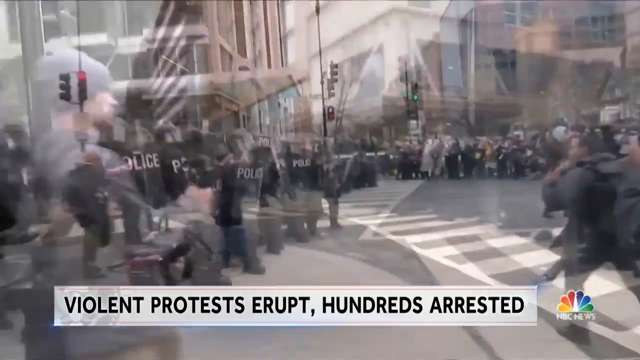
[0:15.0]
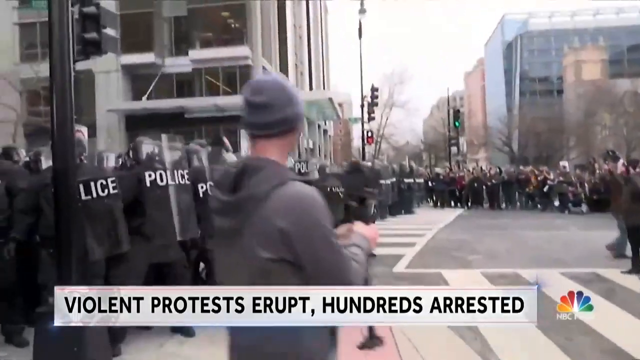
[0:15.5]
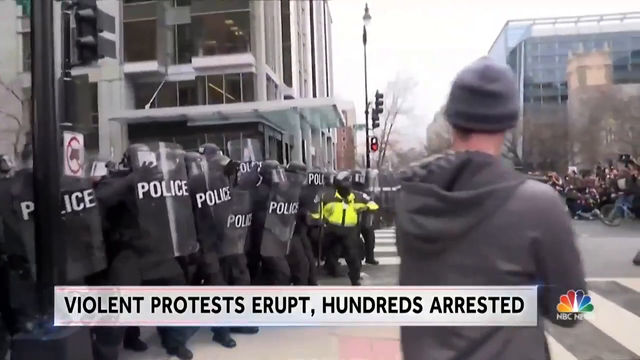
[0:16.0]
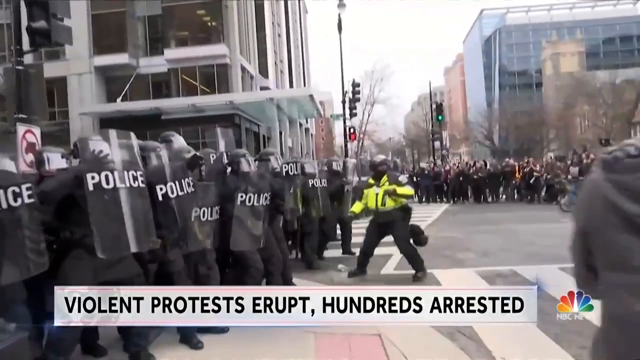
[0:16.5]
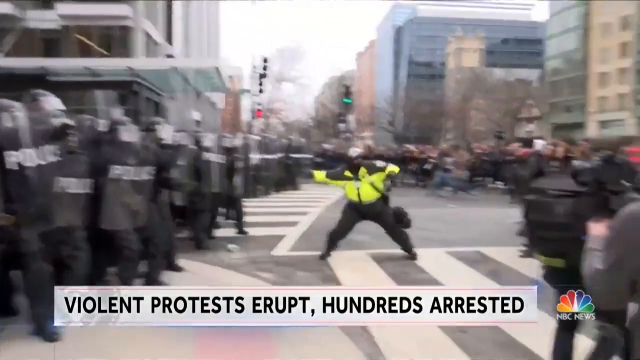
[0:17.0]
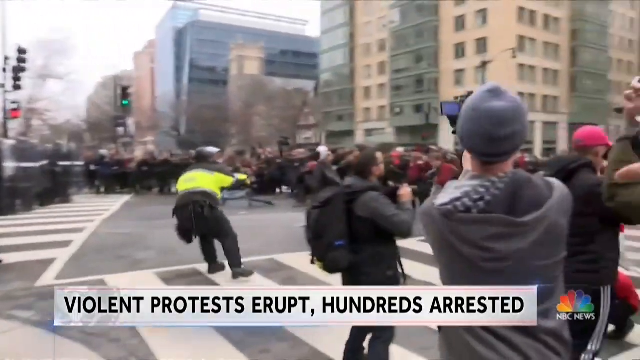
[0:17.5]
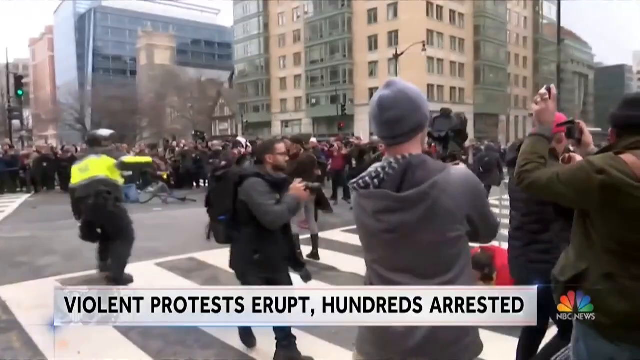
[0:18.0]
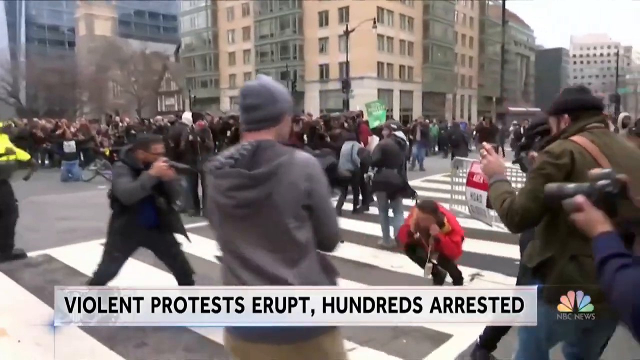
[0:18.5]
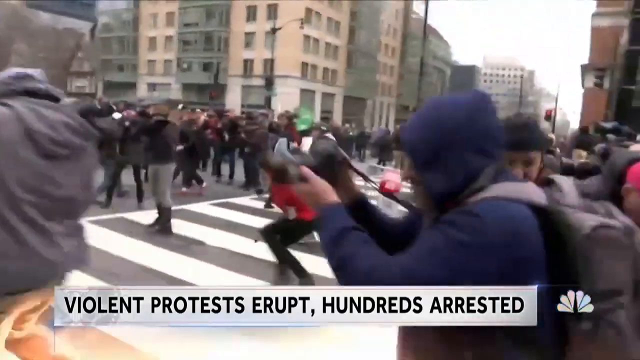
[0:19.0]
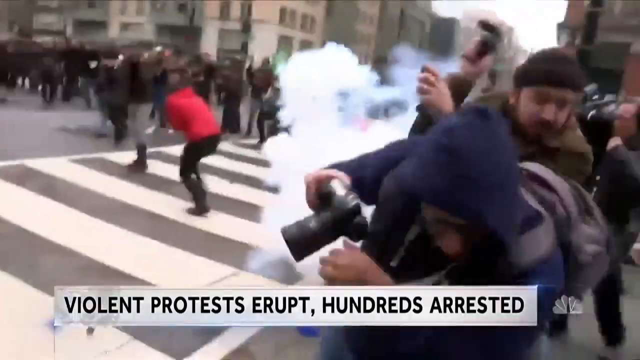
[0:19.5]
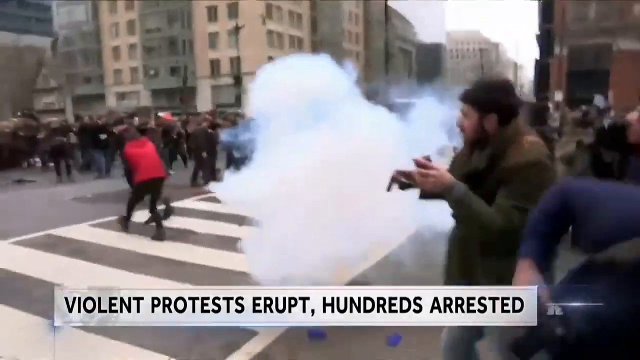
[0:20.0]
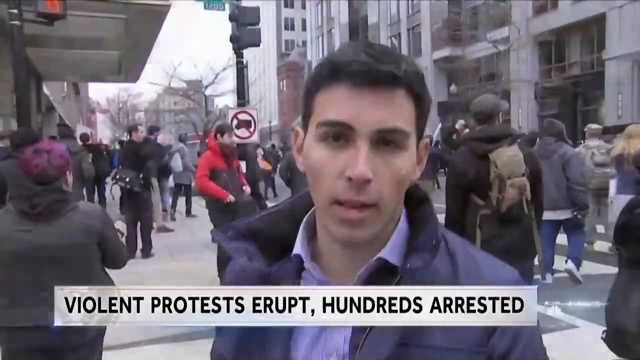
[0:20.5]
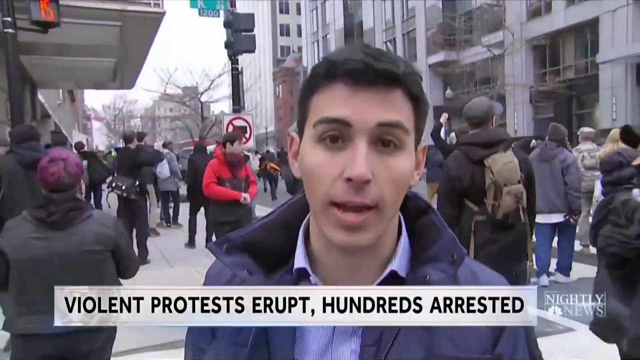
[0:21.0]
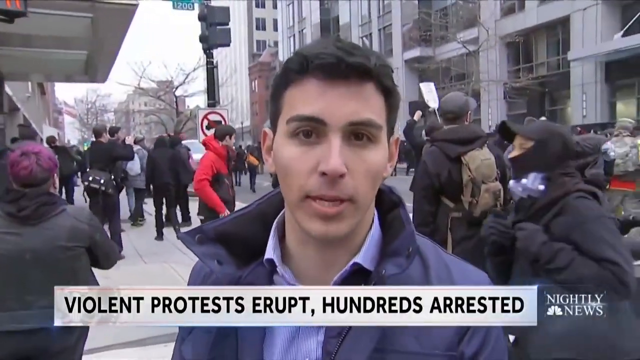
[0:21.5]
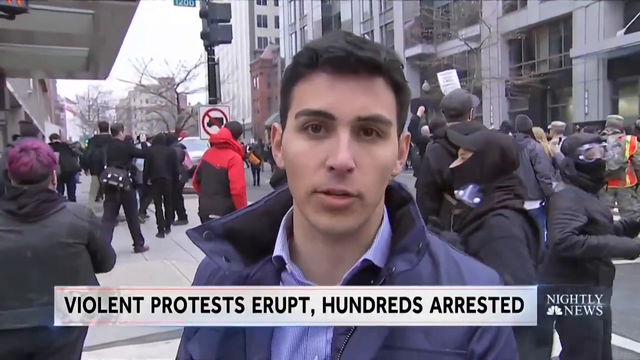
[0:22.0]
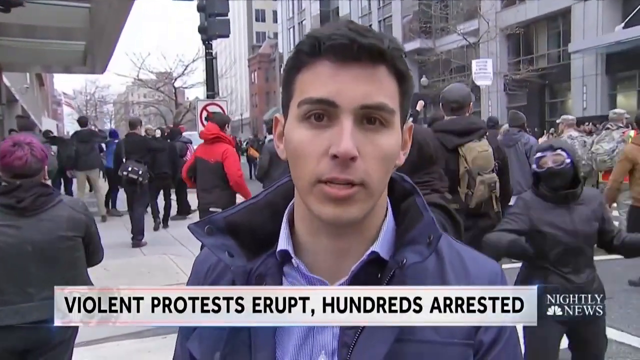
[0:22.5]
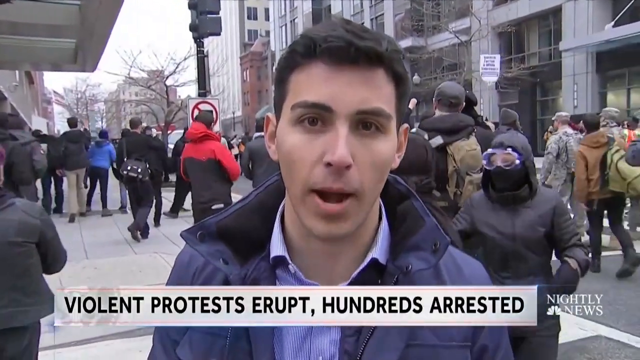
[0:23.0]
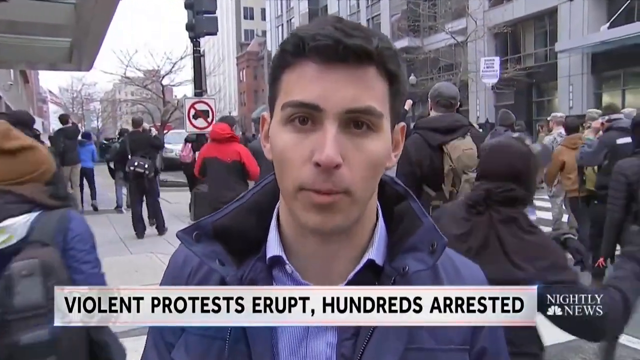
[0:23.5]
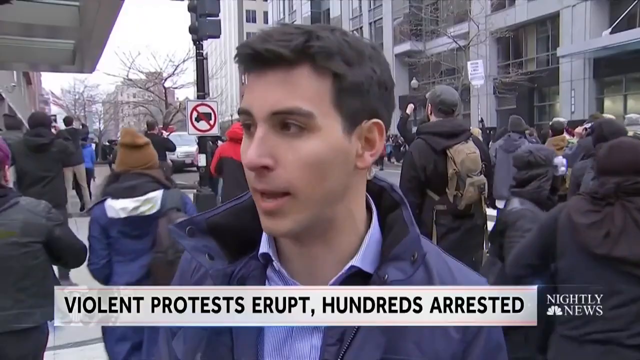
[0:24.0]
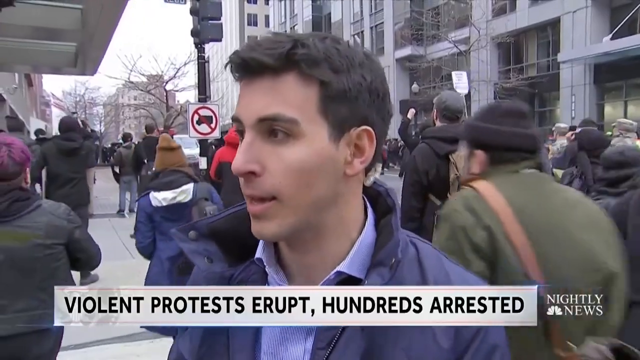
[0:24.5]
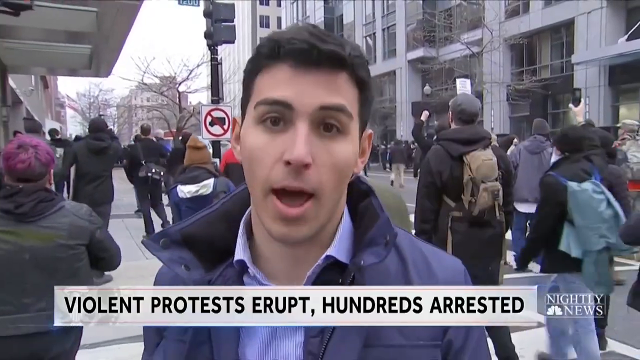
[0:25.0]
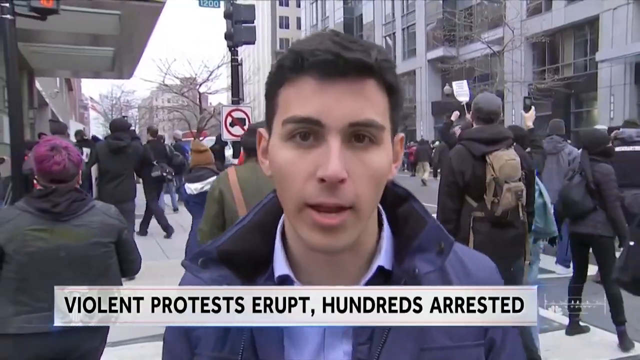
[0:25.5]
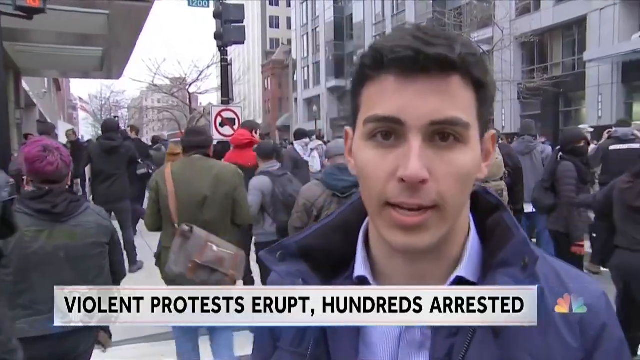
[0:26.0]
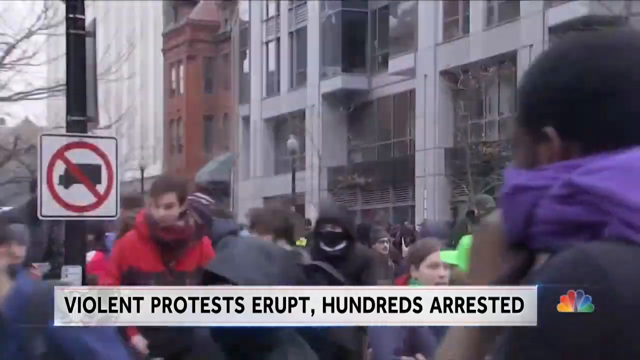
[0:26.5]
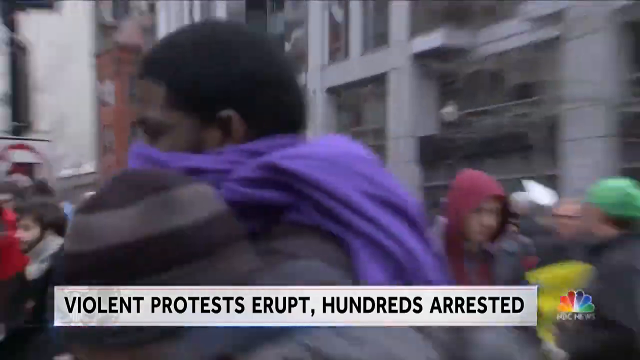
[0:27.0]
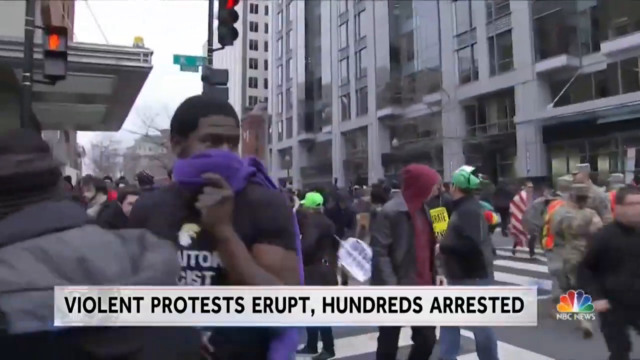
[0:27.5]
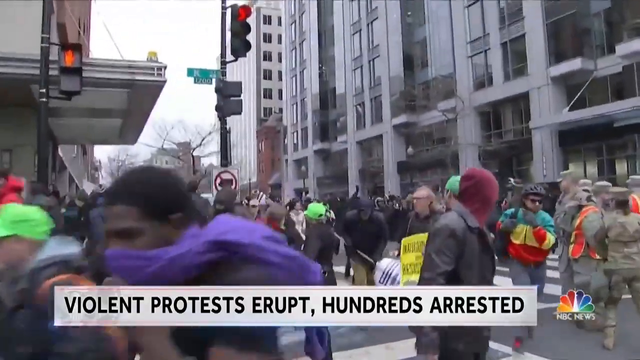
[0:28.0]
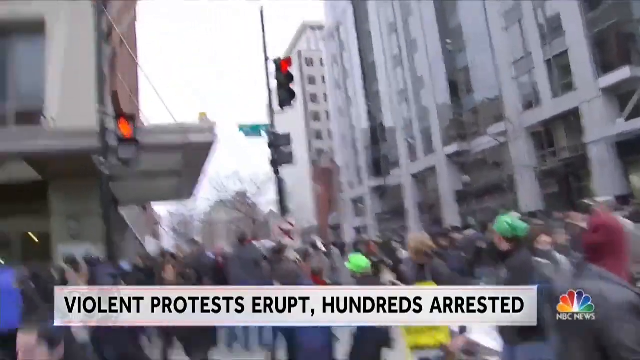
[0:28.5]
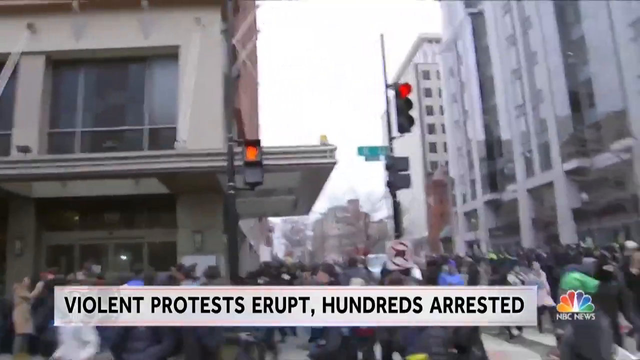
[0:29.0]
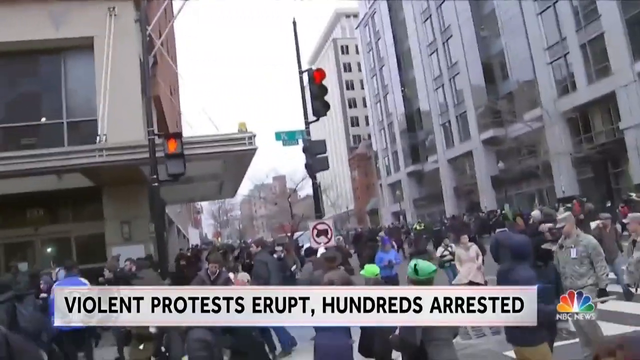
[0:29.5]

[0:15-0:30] Police with riot shields hold the line at an intersection in a dense urban city environment. Many journalists back away from the tear gas. Most of the people in these scenes wear black clothing. The police officer who throws the tear gas wears a neon green jacket, while the rest of the police wear black. A news anchor talks to the camera; he wears a blue jacket and shirt and has brown hair, brown eyebrows and light olive skin.